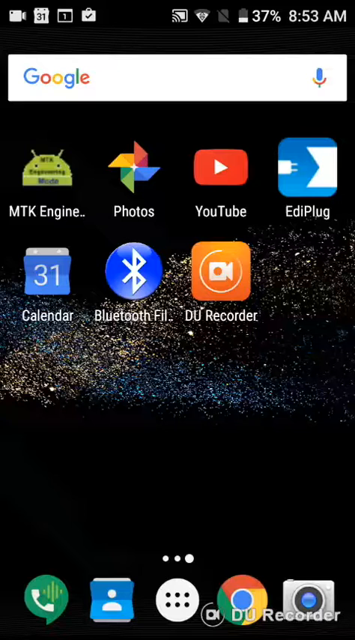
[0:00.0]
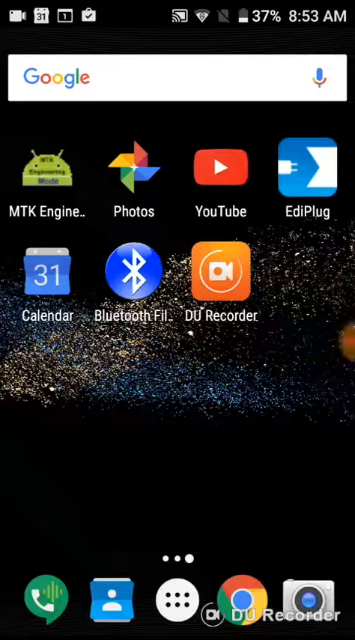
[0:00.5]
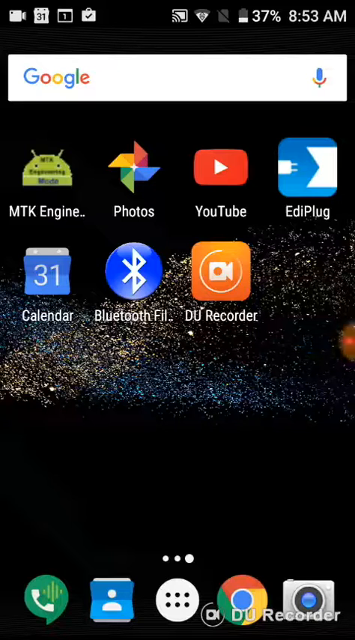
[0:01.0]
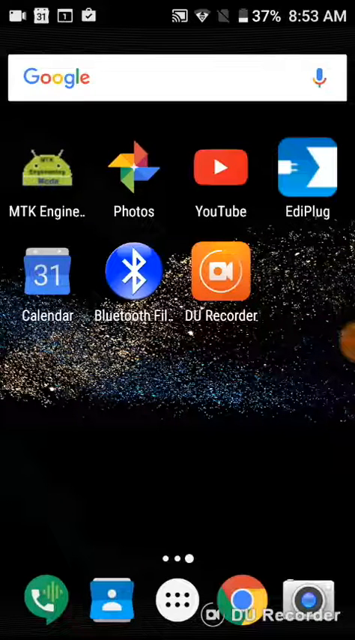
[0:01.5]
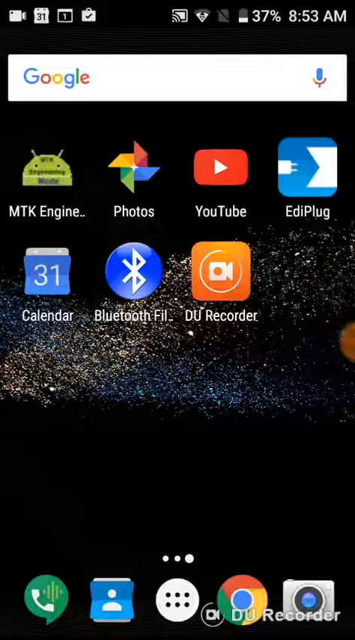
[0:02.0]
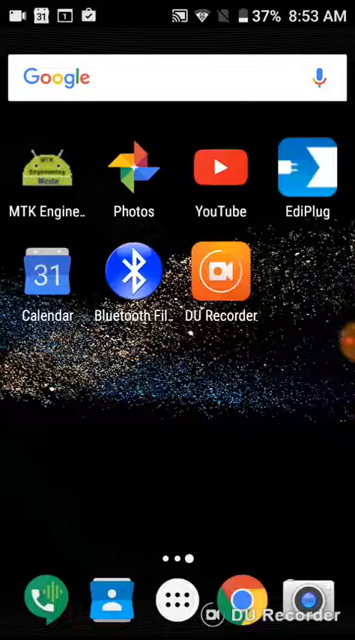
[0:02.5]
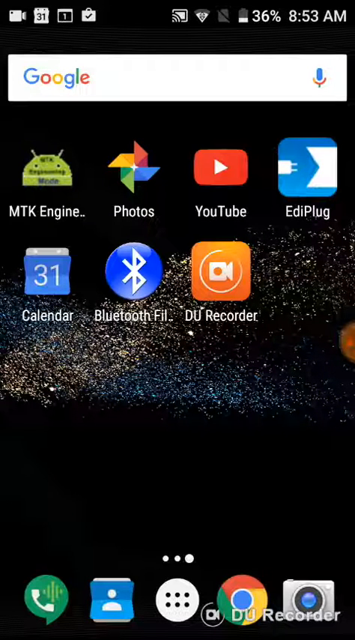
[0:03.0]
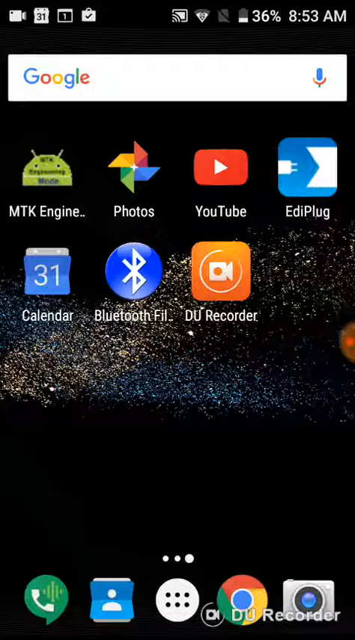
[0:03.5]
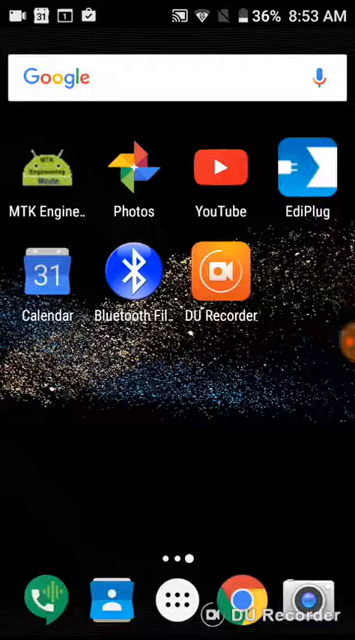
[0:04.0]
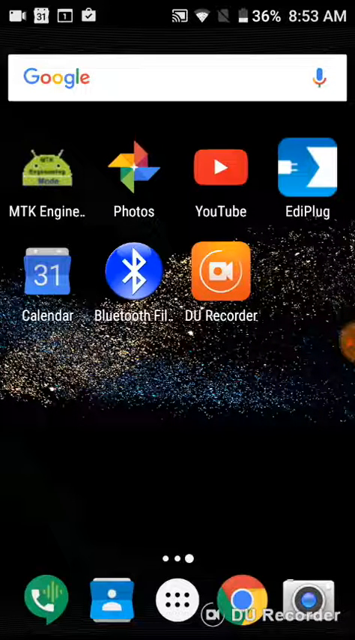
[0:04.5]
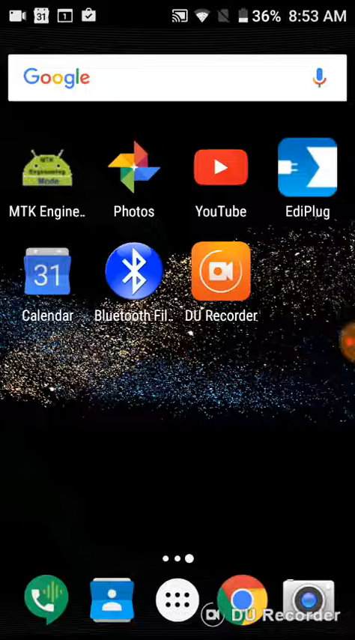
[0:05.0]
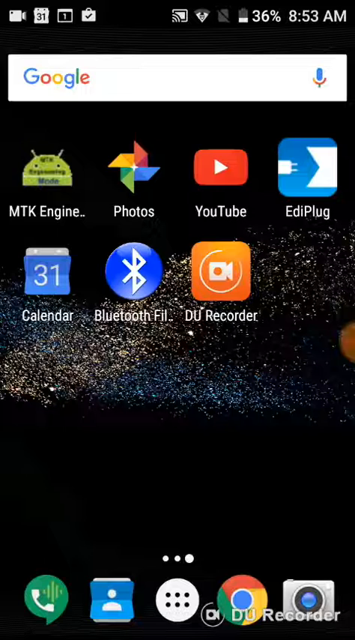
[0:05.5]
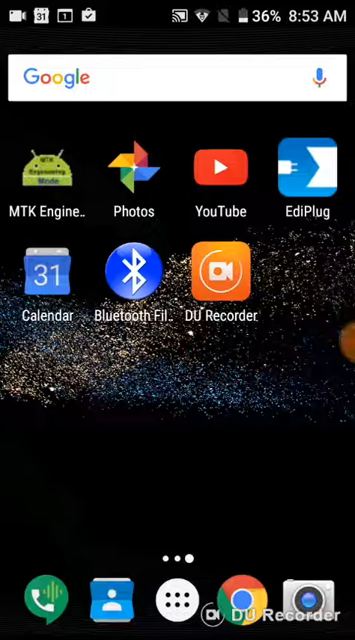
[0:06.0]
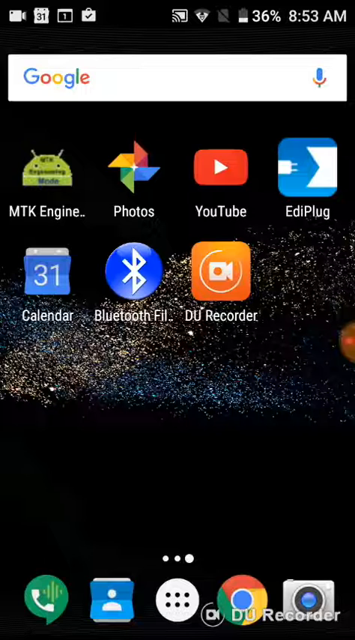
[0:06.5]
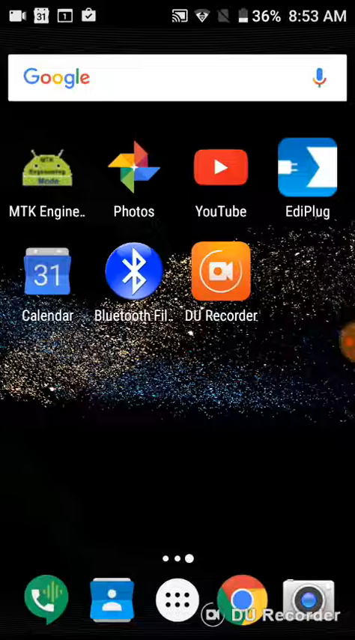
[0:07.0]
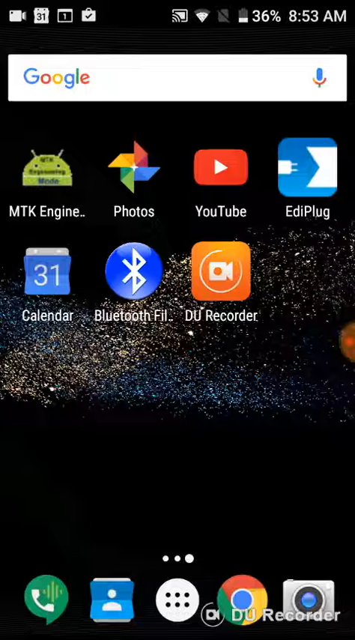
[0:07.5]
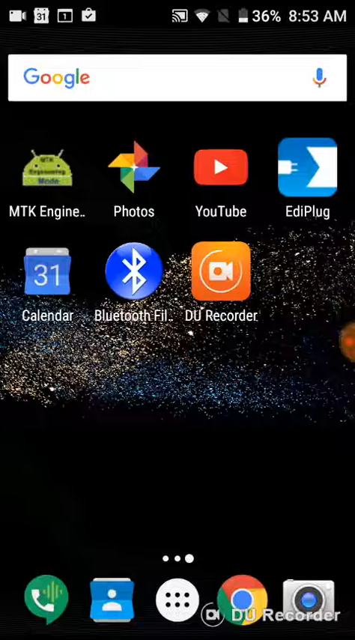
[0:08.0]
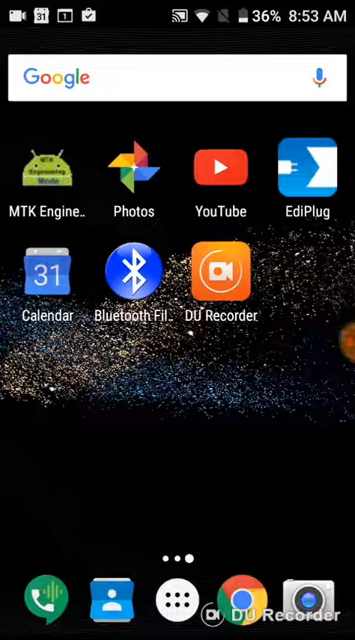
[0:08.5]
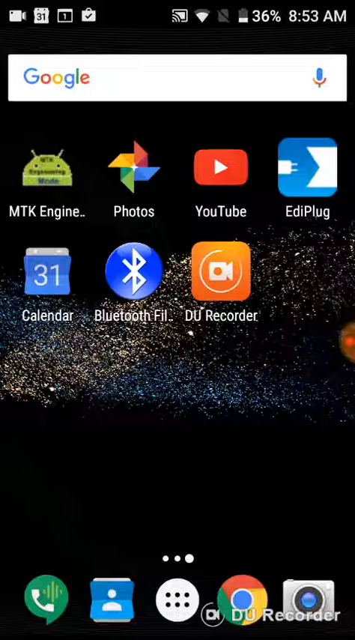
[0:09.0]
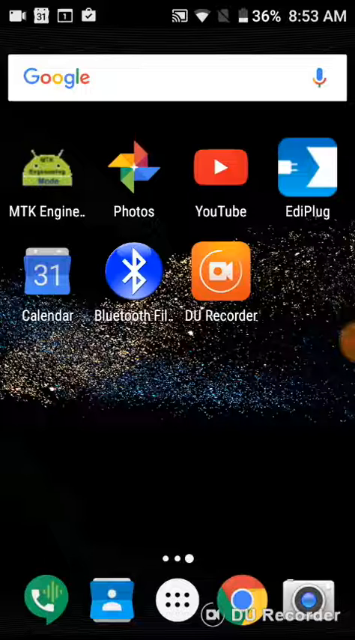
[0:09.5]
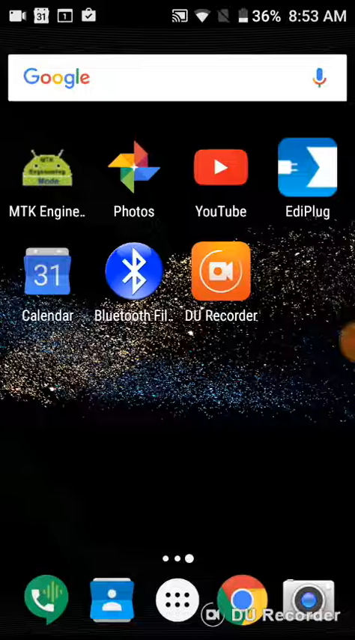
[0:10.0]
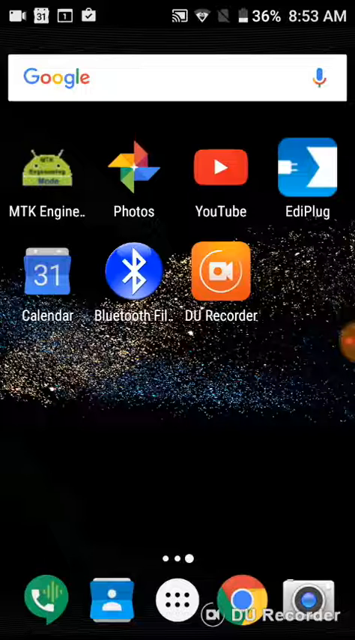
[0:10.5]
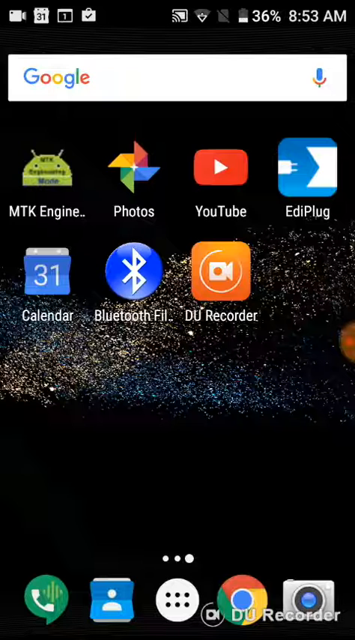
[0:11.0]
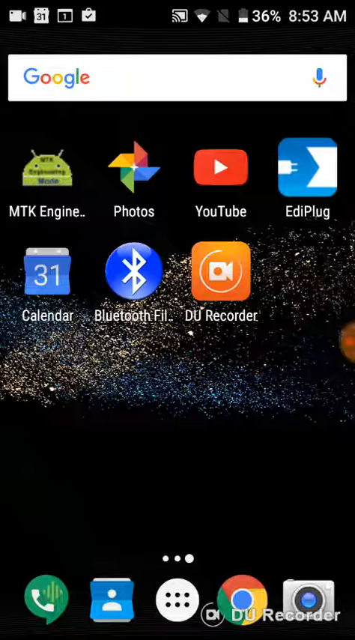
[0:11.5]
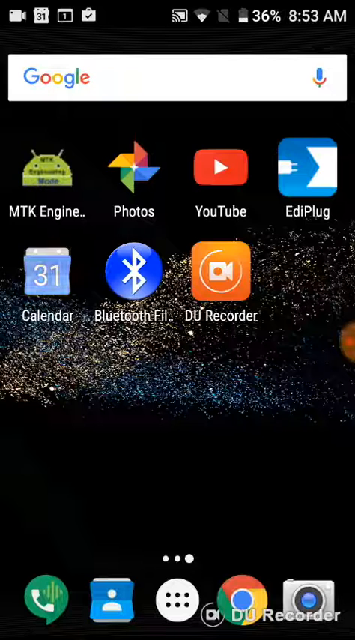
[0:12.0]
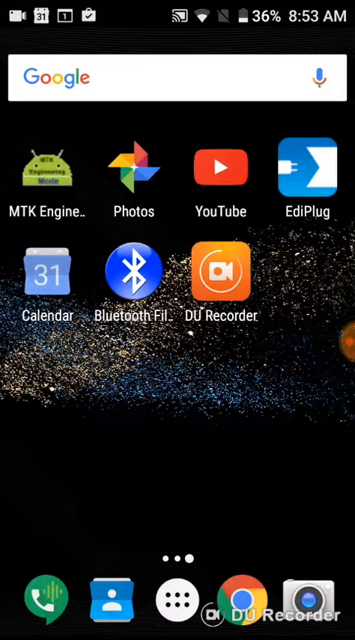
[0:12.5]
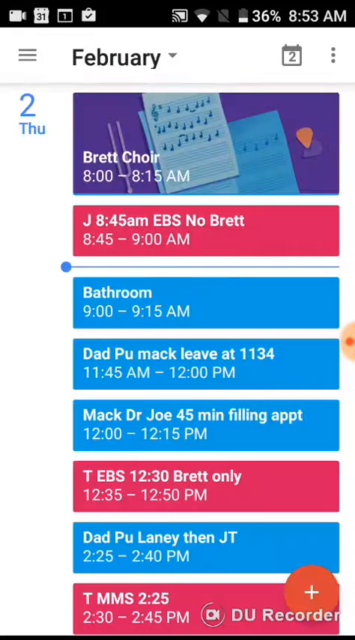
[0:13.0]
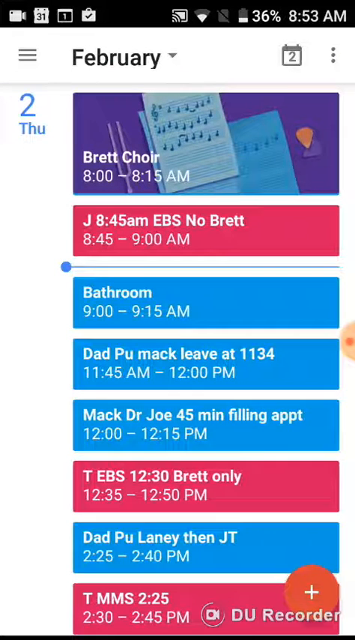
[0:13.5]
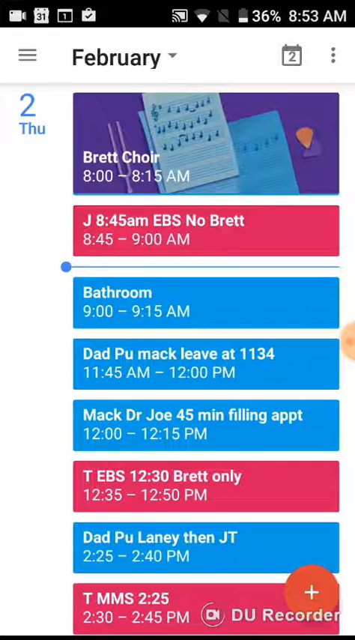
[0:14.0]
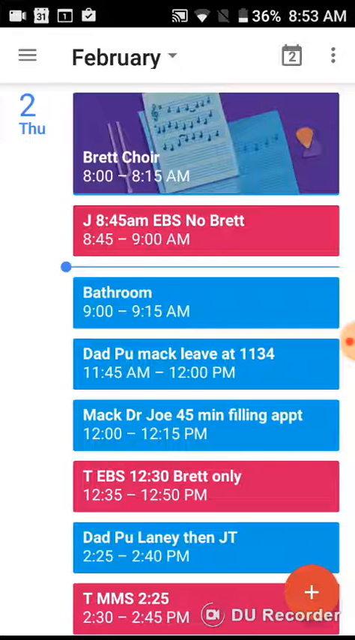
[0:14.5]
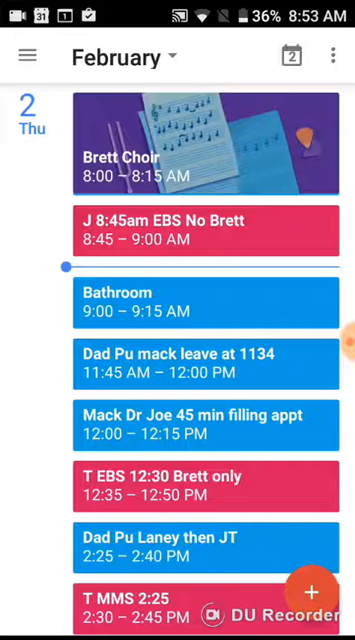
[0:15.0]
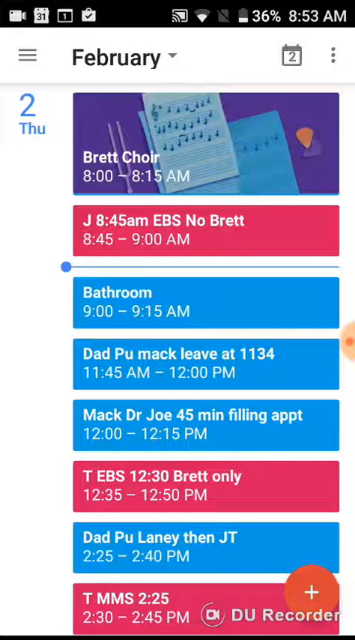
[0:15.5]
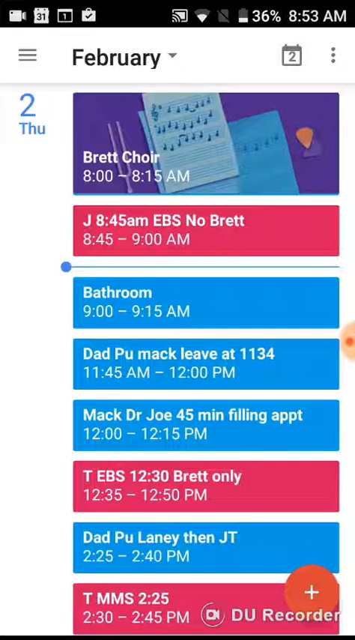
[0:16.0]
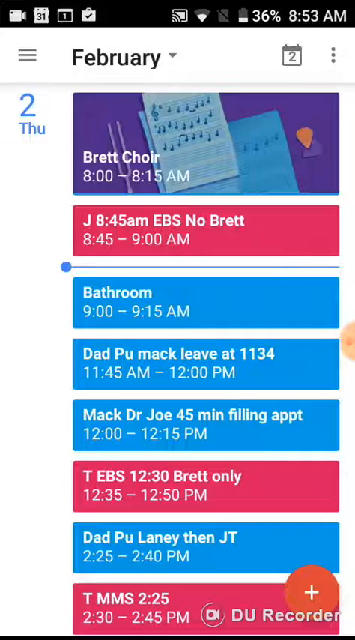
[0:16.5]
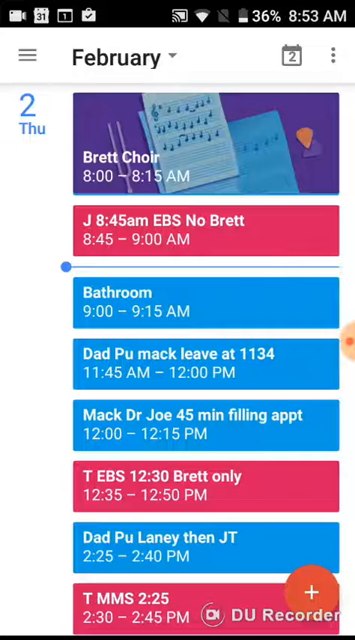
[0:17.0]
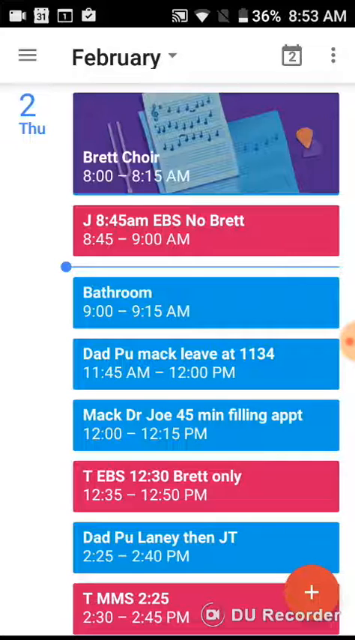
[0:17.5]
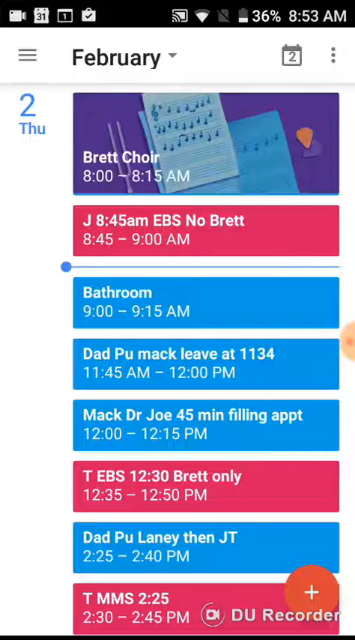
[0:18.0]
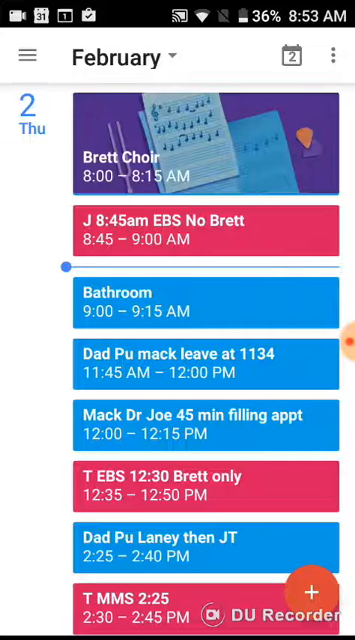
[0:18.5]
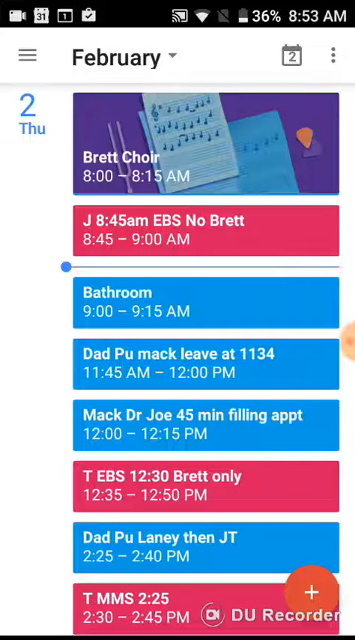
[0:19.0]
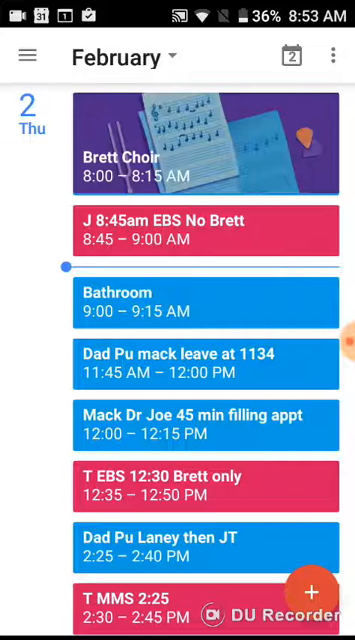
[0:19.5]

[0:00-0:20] The video is a screen recording made with DU Recorder on an Android phone. The user is in their Google Calendar app, which shows a schedule for Thursday, February 2nd. From 8 to 8:15 there is "Brett Choir," and from 8:45 to 9 there is "EBS No Brett." A bathroom break is scheduled from 9 to 9:15. An entry for Dad and Mac runs from 11:45 a.m. to noon. Another entry reads "Mac, Dr. Joe, 45-minute filling appointment," probably a dentist visit, though only 15 minutes are allocated for it. From 2:25 to 2:40 there is "dad pick up Laney, then JT." Entries labeled "T.E.B.S." and "TMMS" follow. The search bar is Google, the current time is 8:53 a.m., and the battery is at 37 percent.